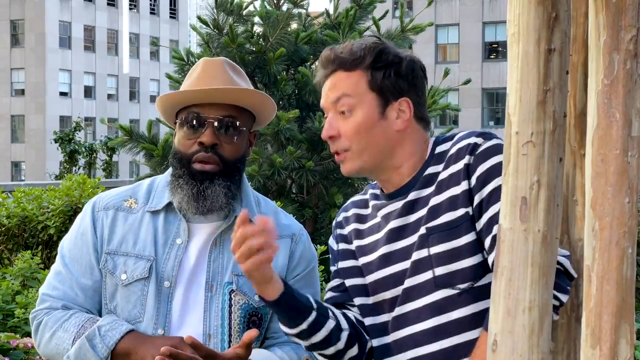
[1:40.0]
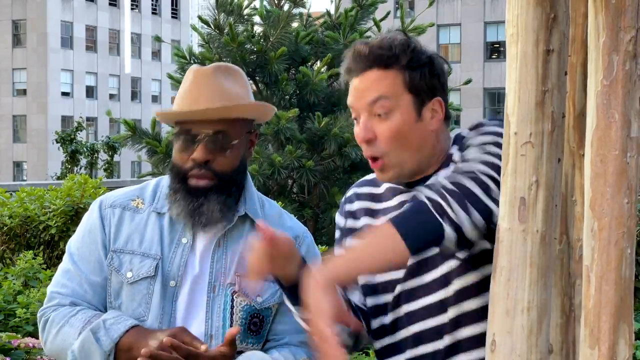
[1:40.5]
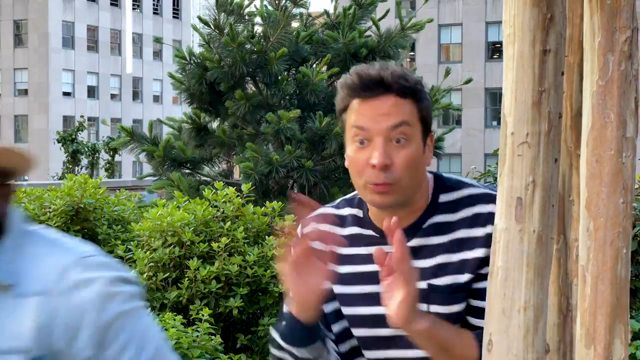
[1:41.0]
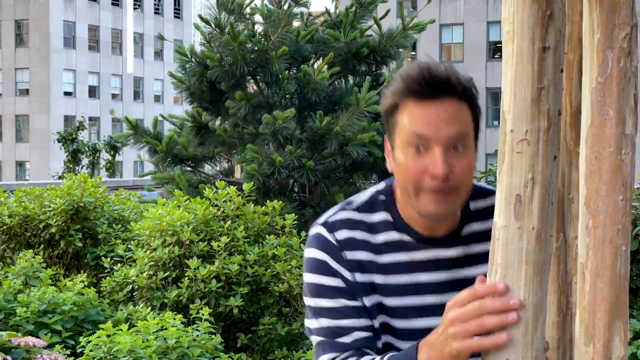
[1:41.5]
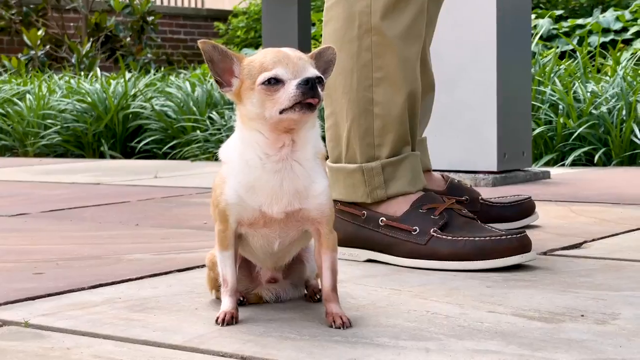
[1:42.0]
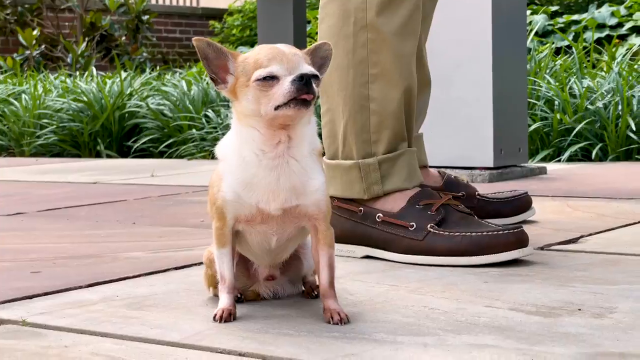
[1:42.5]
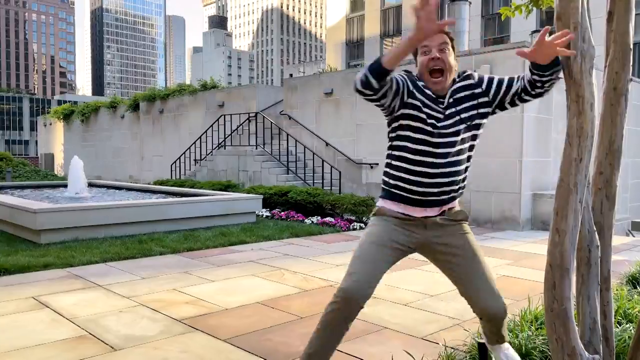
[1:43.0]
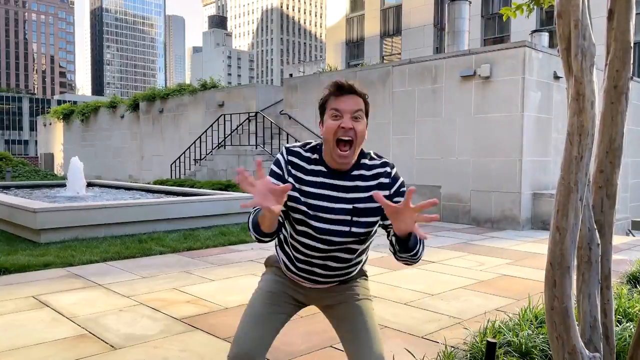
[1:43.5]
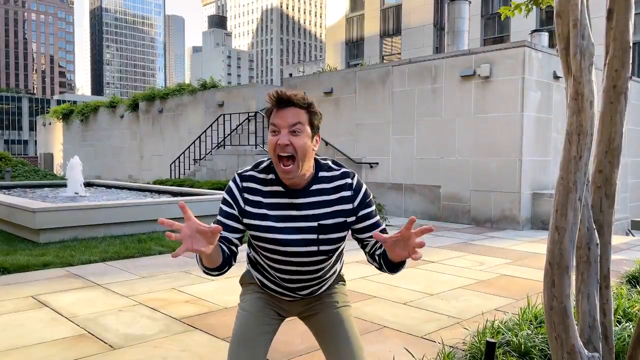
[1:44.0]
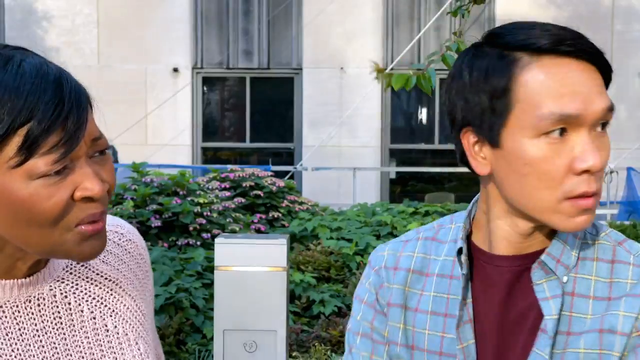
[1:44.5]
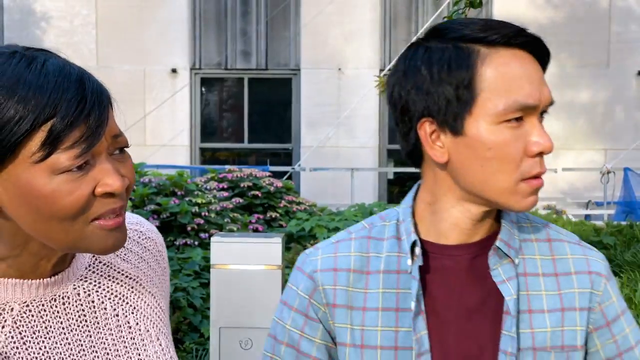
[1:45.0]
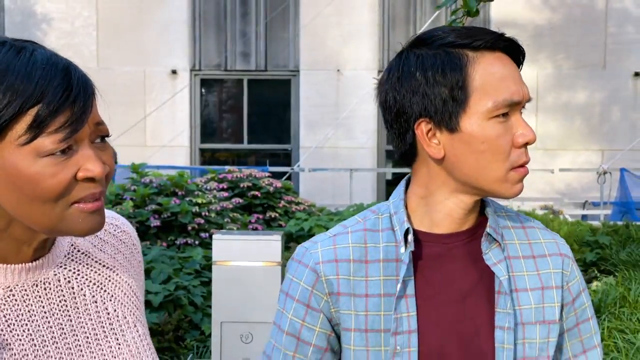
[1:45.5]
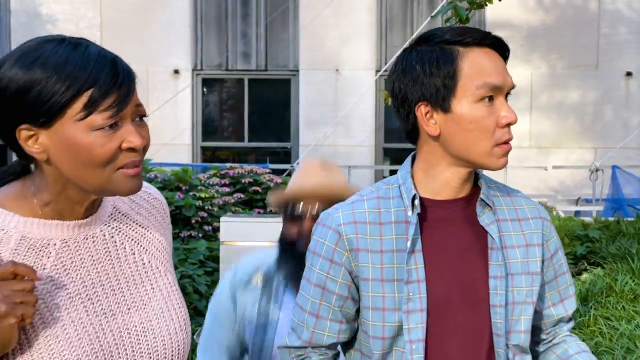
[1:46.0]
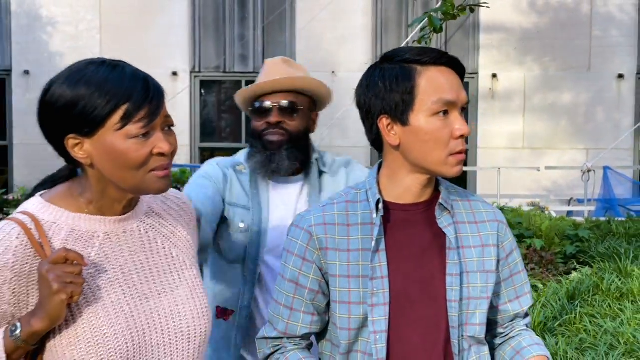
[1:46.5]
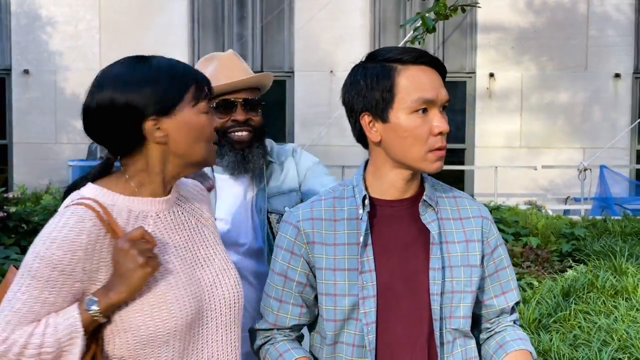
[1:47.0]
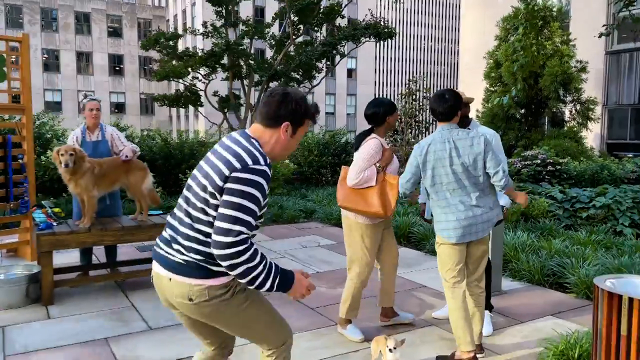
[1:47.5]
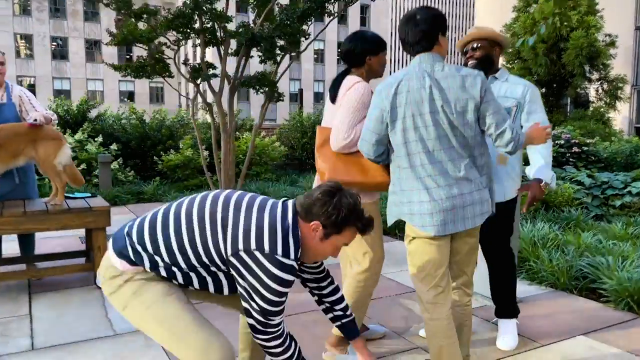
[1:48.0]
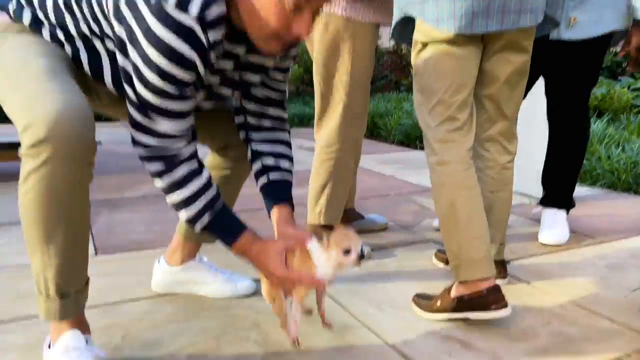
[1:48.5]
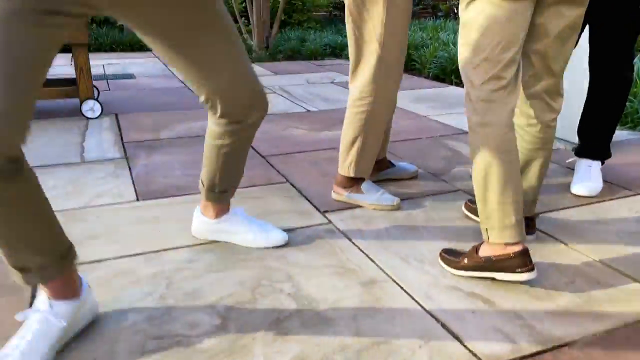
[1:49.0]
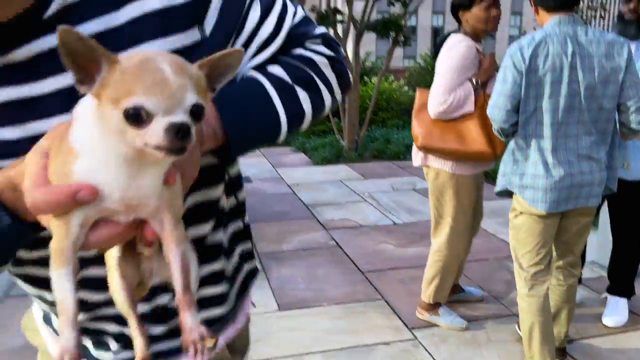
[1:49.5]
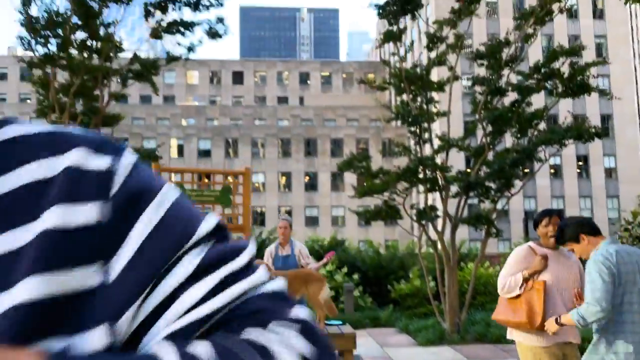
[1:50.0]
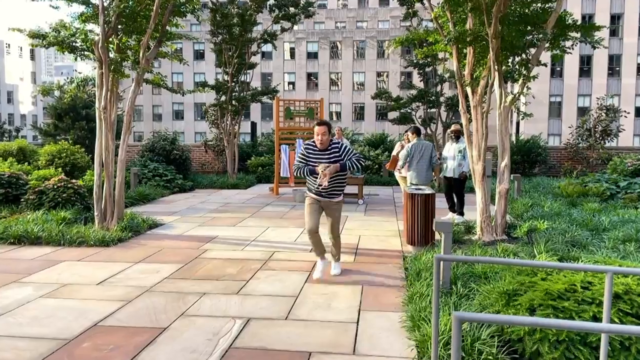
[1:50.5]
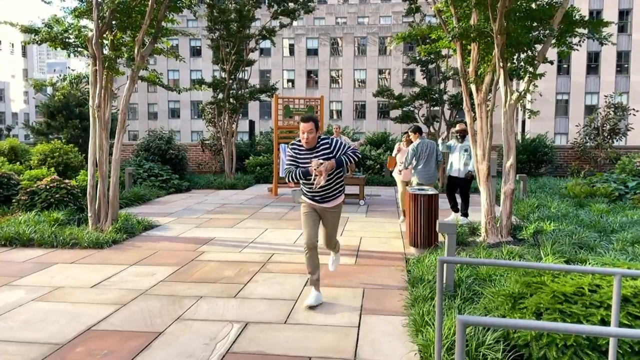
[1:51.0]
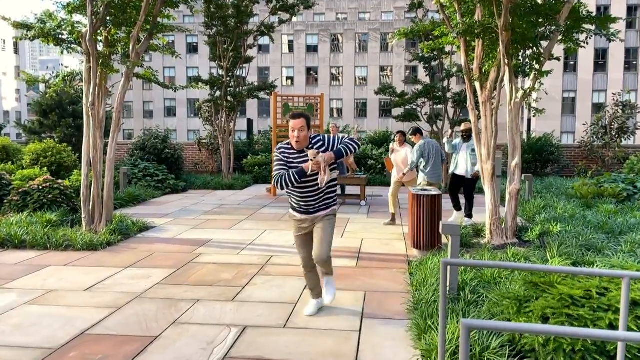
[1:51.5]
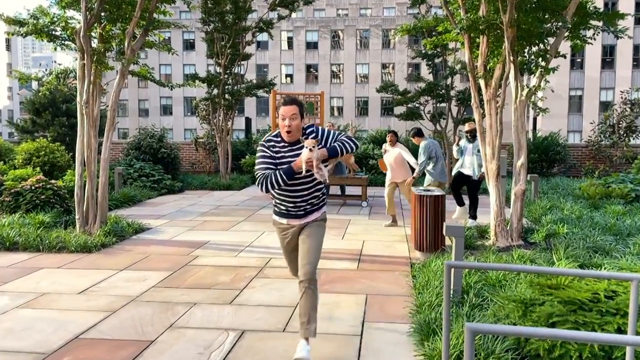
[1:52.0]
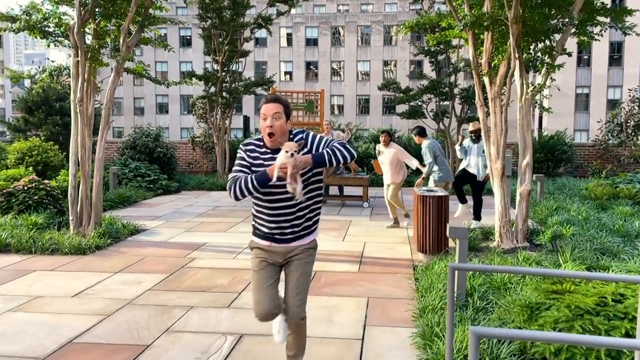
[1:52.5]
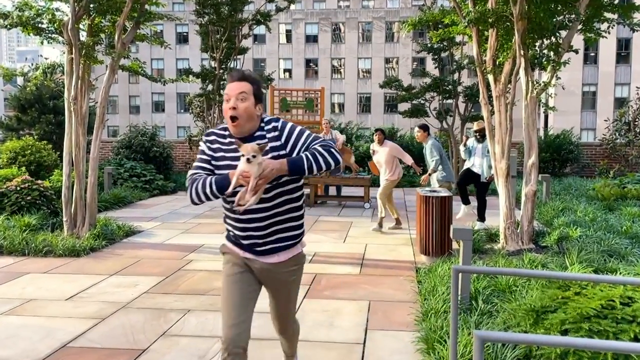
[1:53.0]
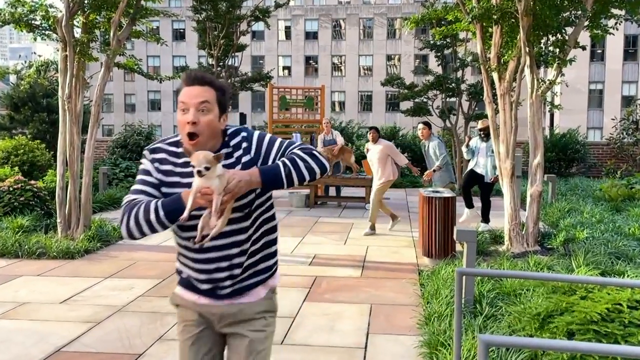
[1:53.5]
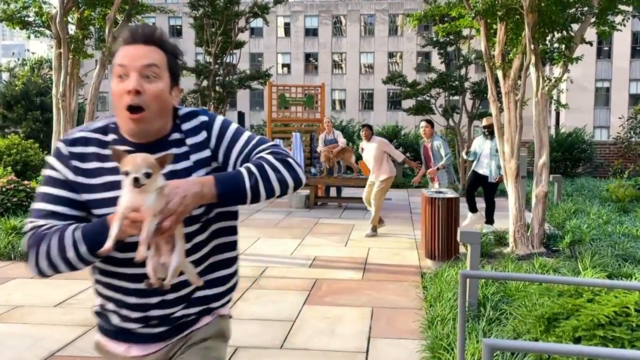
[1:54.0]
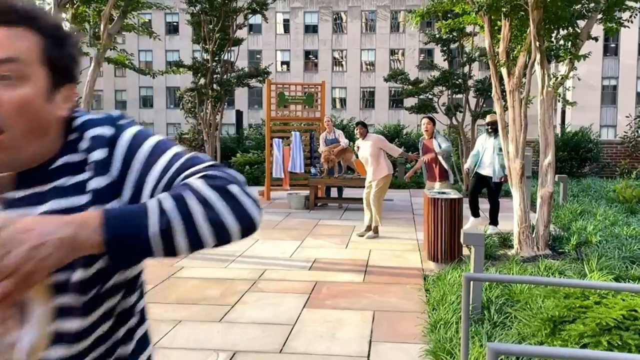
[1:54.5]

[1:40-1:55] A man talks to another man behind a tree. The man in the blue and white striped shirt tells the other man to go and do something; the other man wears a blue button-up shirt, a hat and dark sunglasses, and he runs away. The man in the striped shirt jumps out from behind the tree as if to scare a couple standing in a little area. As they look at what just happened, the man in the hat and sunglasses comes up behind the couple and taps them on the shoulders. As they turn around to look at him, the man in the striped shirt sneaks up and grabs the little Chihuahua sitting at their feet while they are distracted. He runs away holding the little dog in his hands, with an expression like he is scared or hopes he can get away fast enough. The couple sees what is happening and takes off after him.